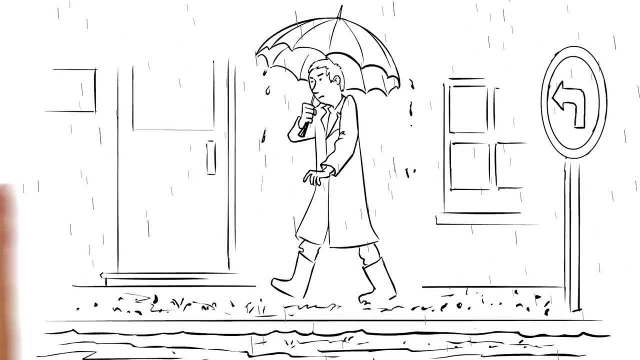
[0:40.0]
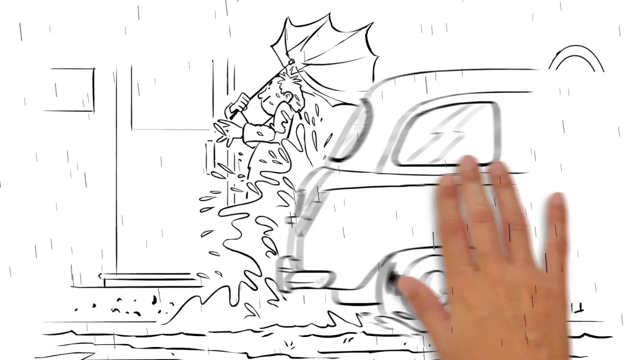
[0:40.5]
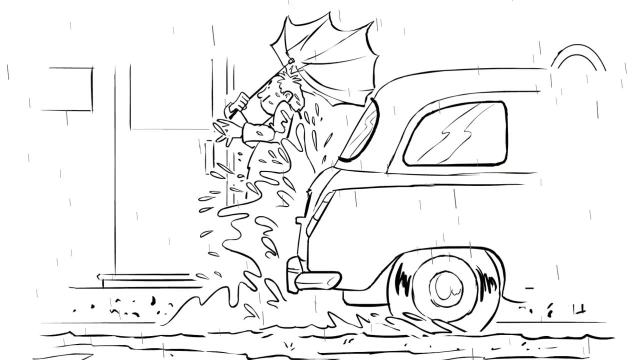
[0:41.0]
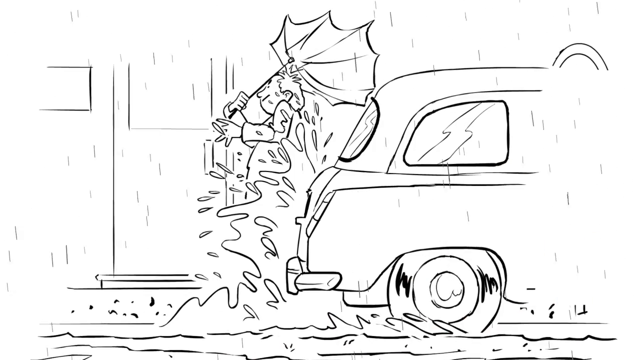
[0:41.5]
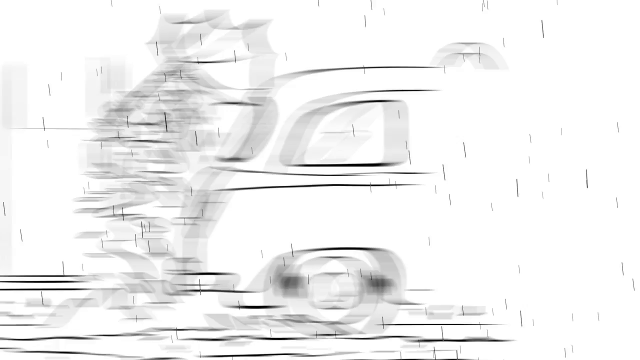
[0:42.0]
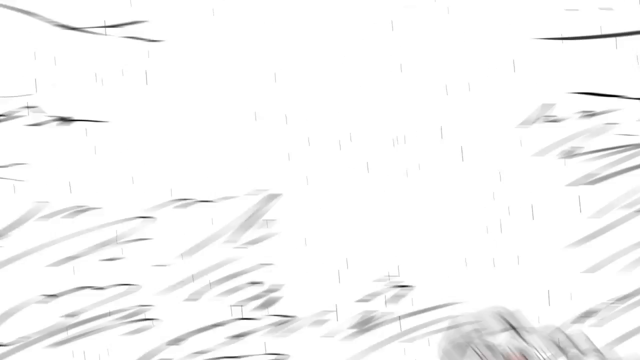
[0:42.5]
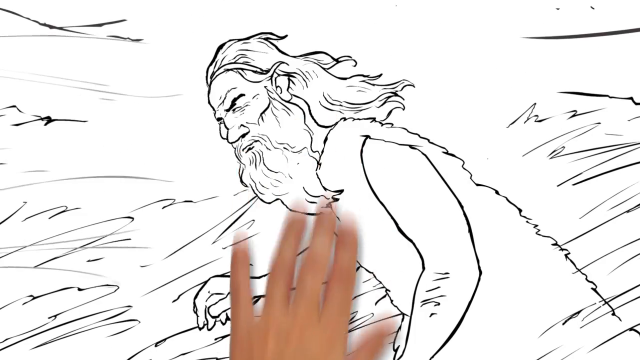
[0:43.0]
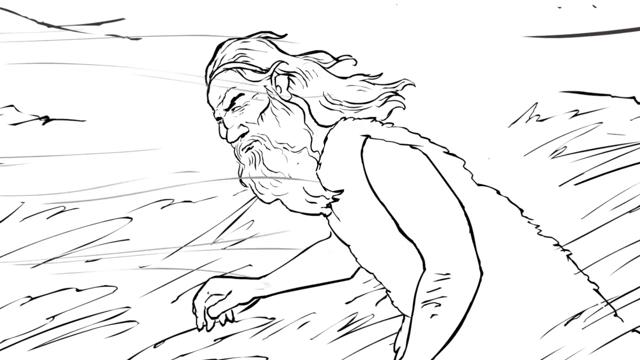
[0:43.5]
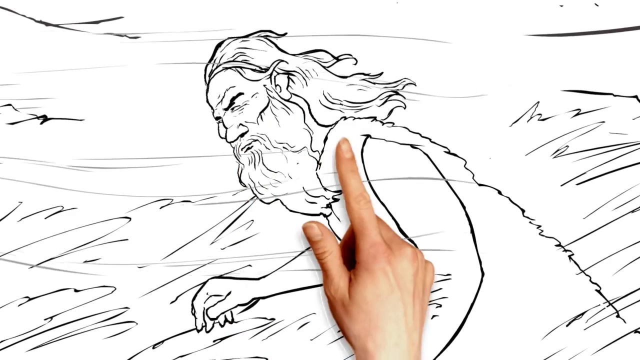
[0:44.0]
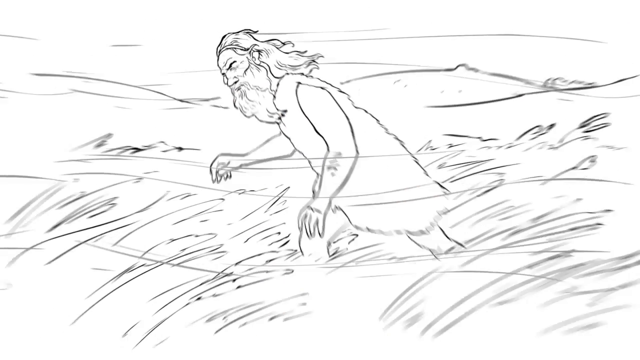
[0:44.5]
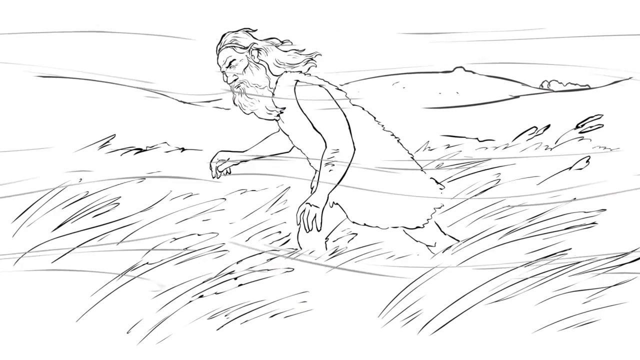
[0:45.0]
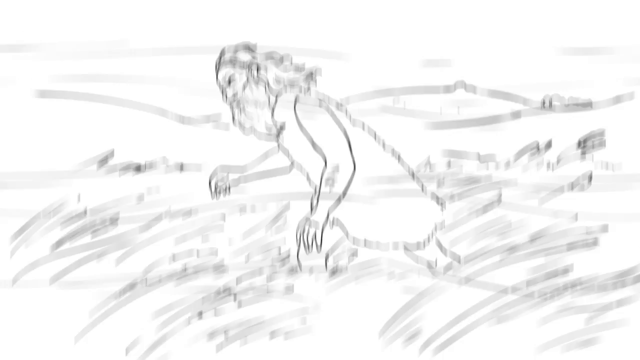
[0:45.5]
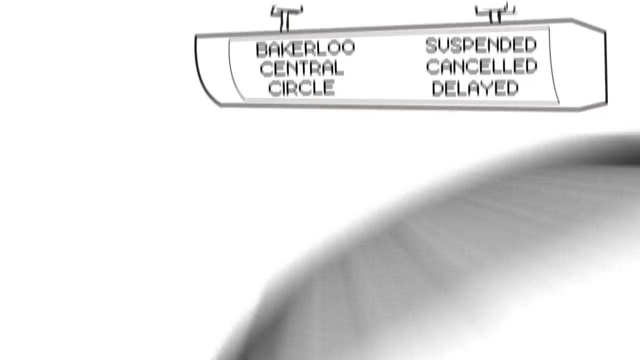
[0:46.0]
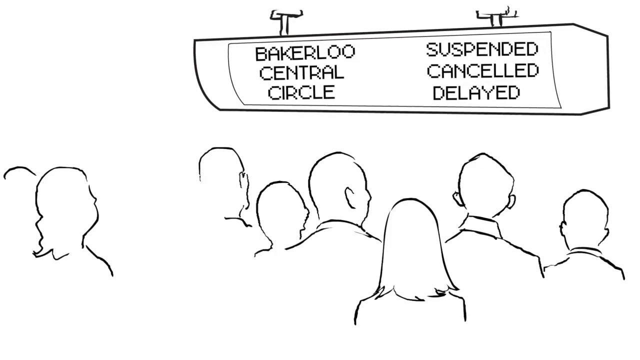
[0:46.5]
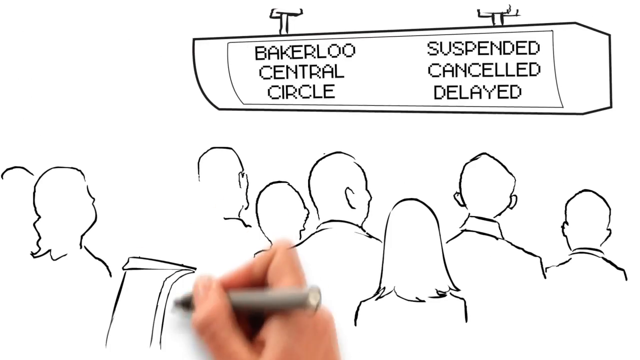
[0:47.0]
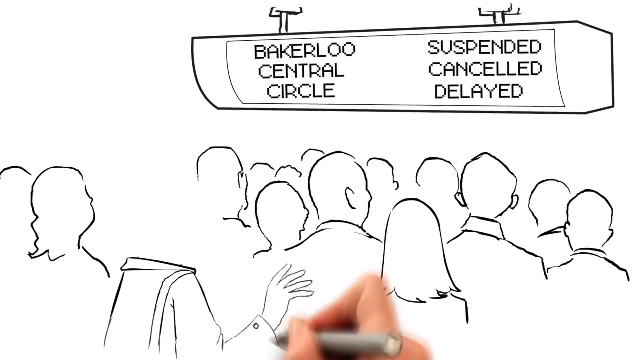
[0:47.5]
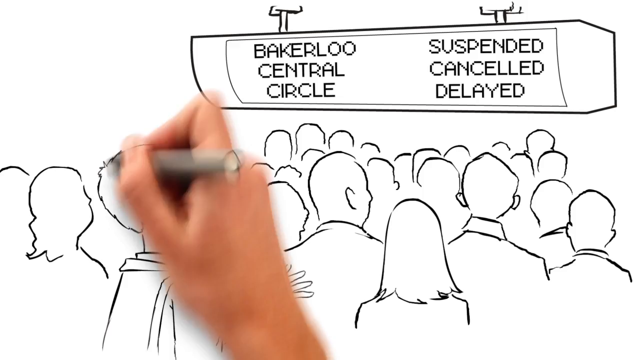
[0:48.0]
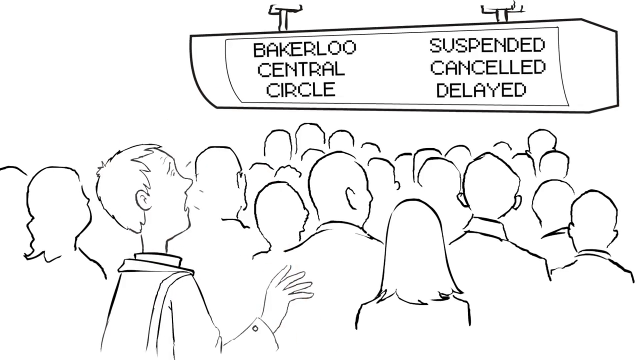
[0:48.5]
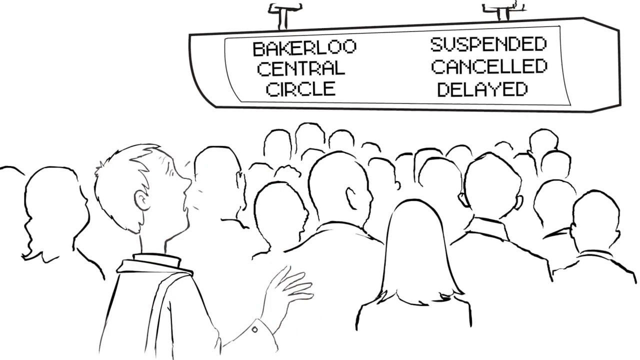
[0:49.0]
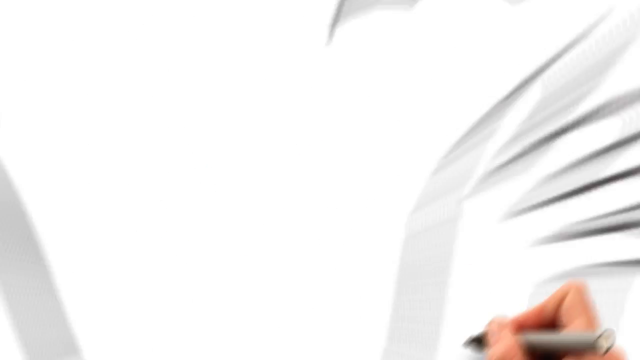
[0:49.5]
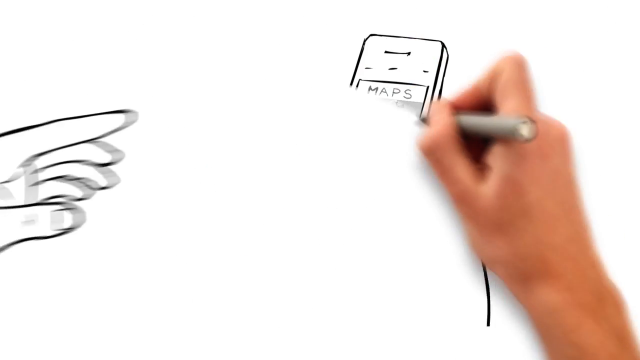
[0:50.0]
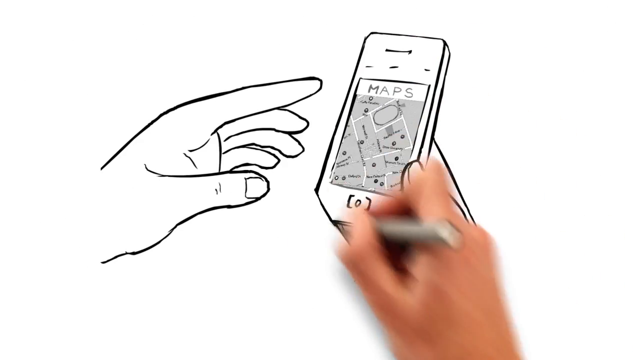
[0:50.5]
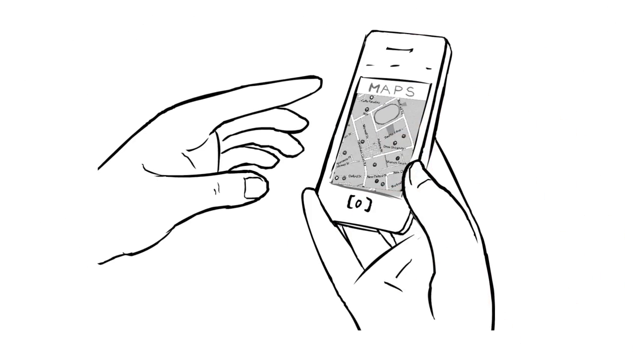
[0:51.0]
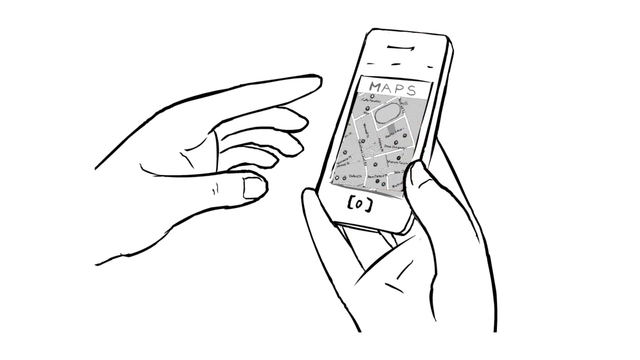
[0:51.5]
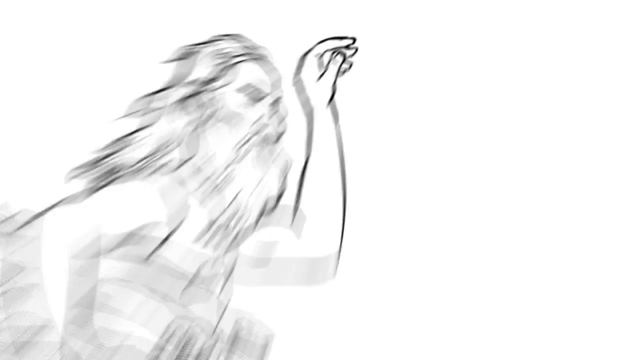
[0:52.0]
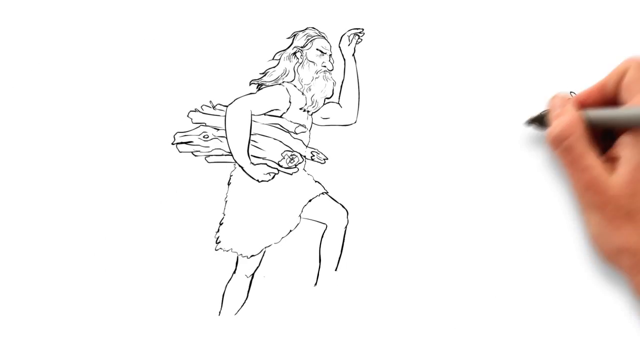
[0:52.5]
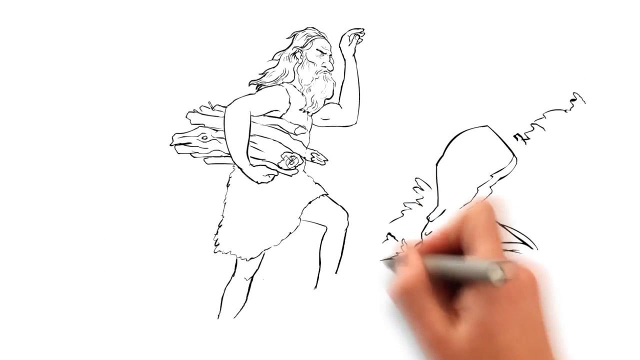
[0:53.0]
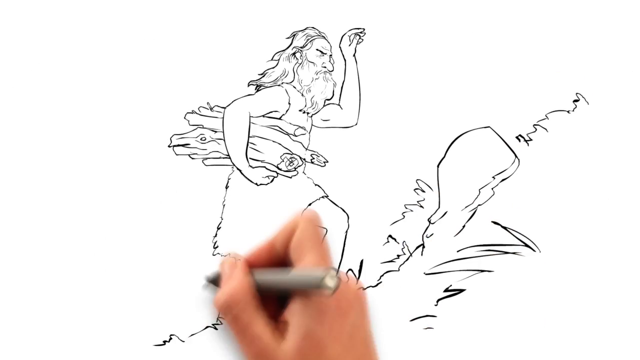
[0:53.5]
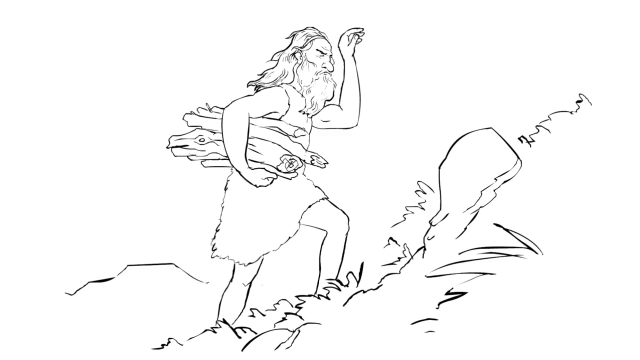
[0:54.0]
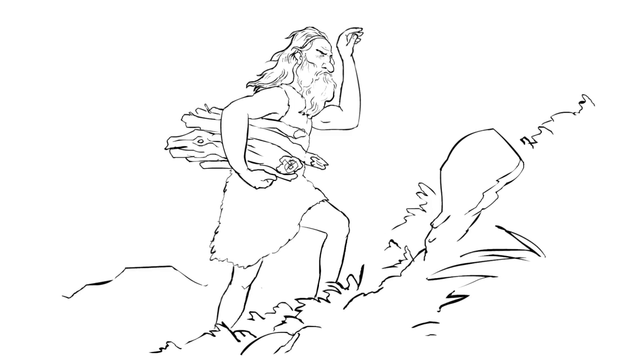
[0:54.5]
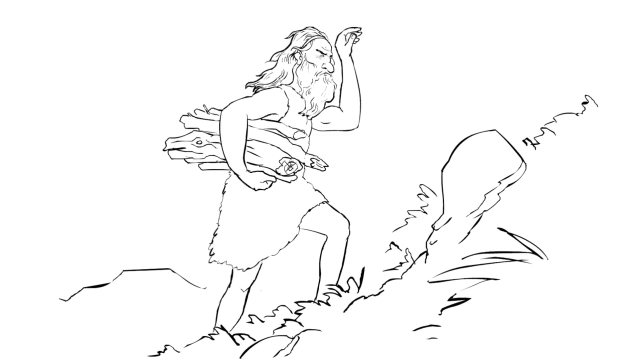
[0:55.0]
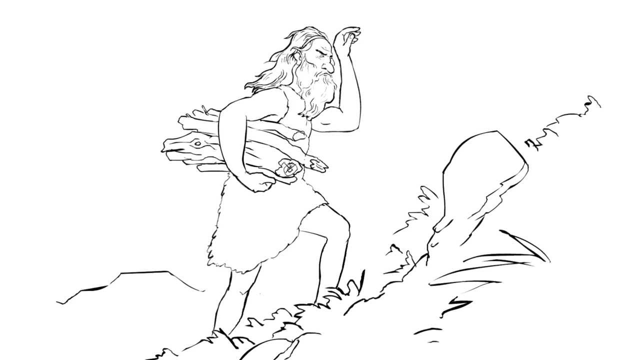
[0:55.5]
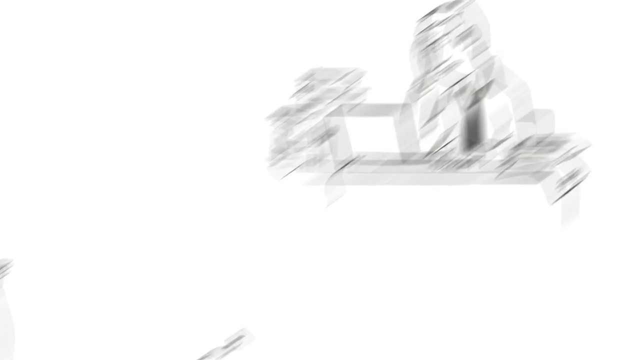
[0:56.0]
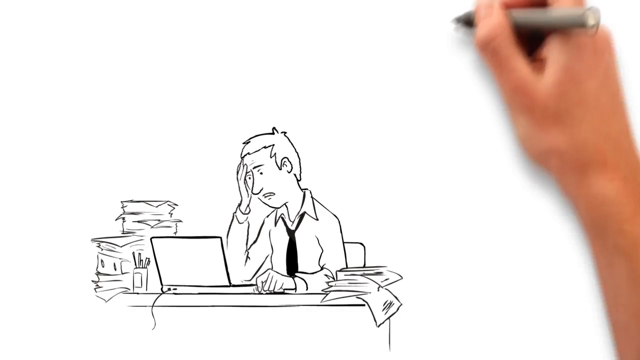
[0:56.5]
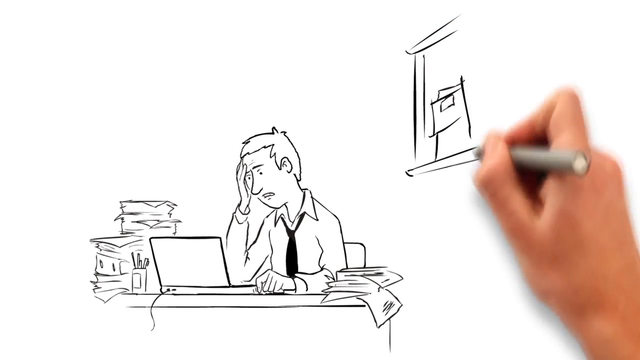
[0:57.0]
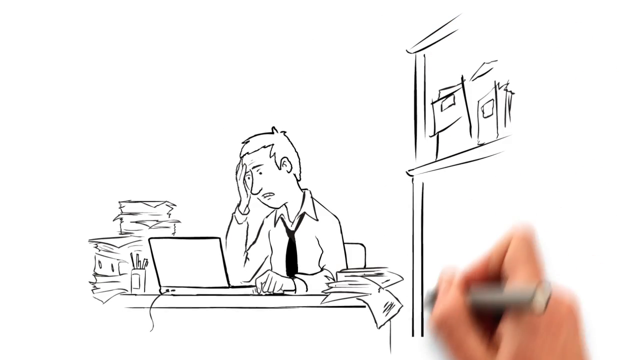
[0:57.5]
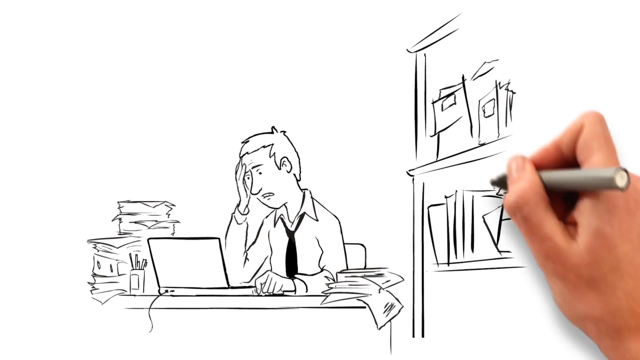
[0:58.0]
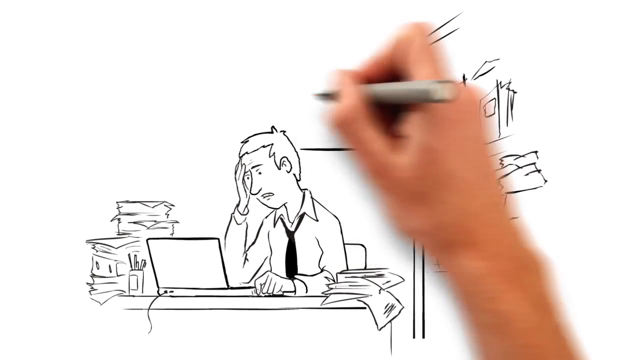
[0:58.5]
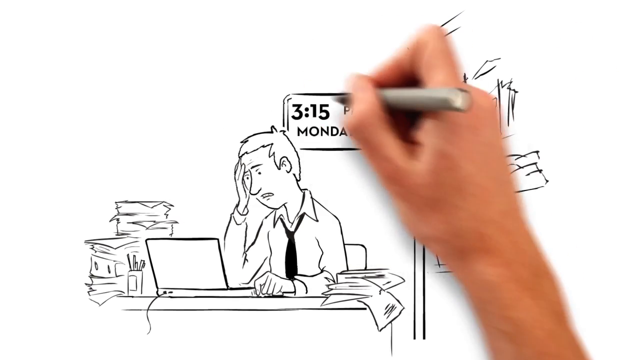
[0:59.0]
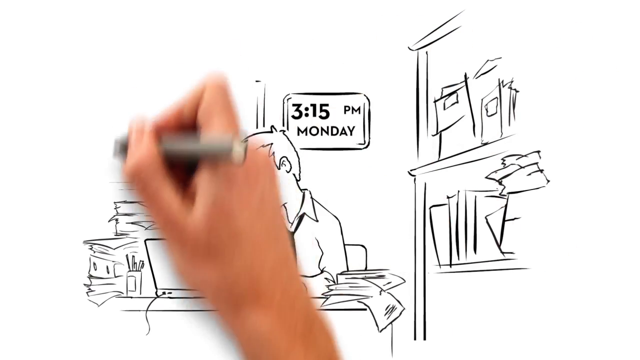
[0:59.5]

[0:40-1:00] A black-and-white cartoon drawing shows a modern man with an umbrella over his head, and then what looks like a car driving by and splashing him with water. The images are still, but raindrops are made to look like they are coming down, so they are semi-animated. Another image shows the bearded caveman figure, apparently standing in a field. Next is a drawing of several people waiting in a line, with a sign above reading "Bakerloo suspended, central canceled, circle delayed," possibly at a train station. A drawing of two hands holding a phone follows, with a maps app on the screen. The long-haired caveman-like figure then walks up a hill carrying a bundle of wood and sticks under his arm. Finally, the modern man is drawn sitting at a desk with piles of paper on it and a clock behind him reading "3 15 p.m. Monday."